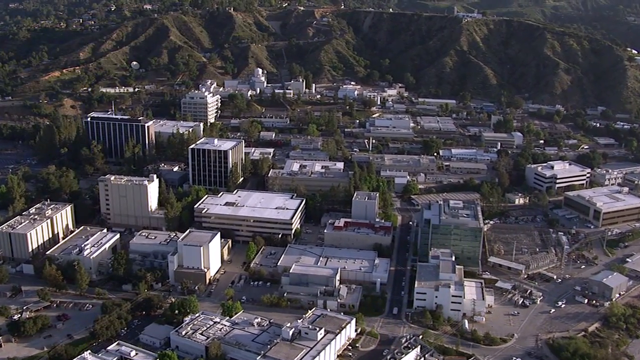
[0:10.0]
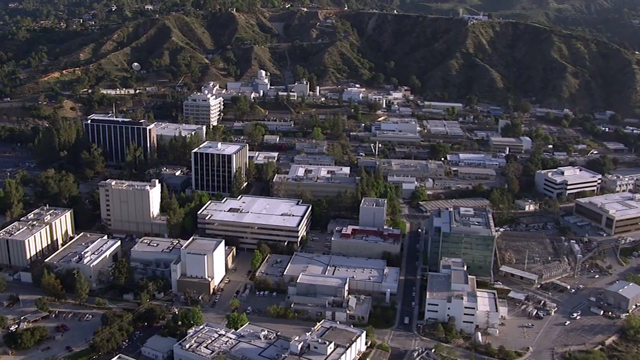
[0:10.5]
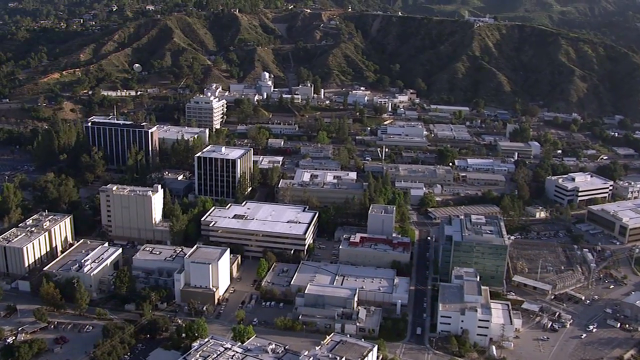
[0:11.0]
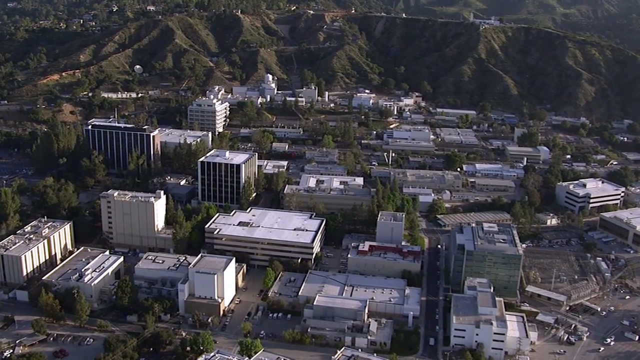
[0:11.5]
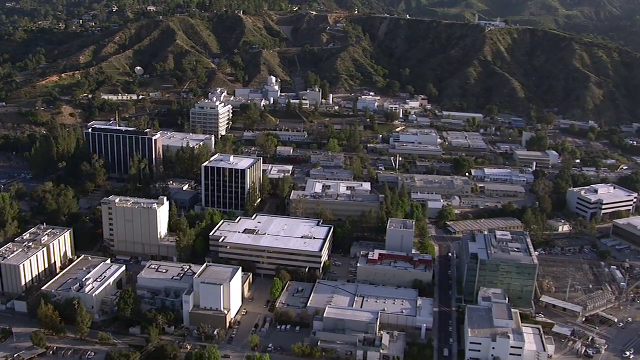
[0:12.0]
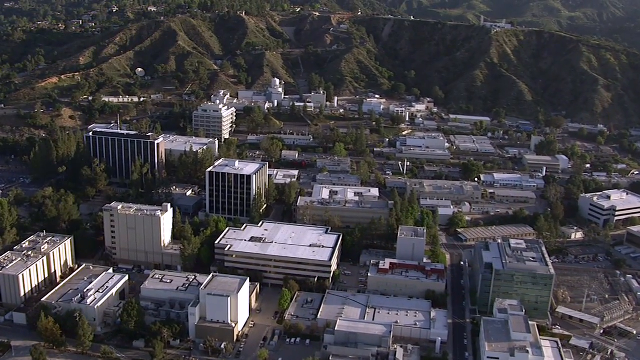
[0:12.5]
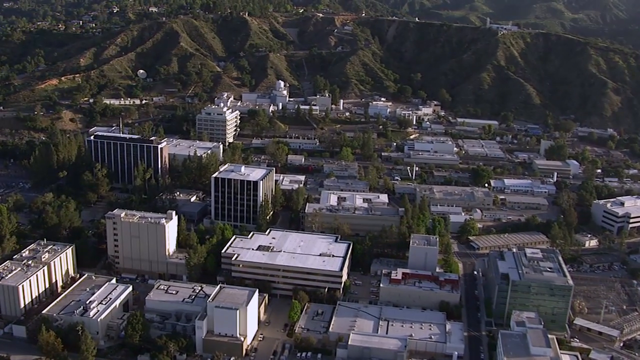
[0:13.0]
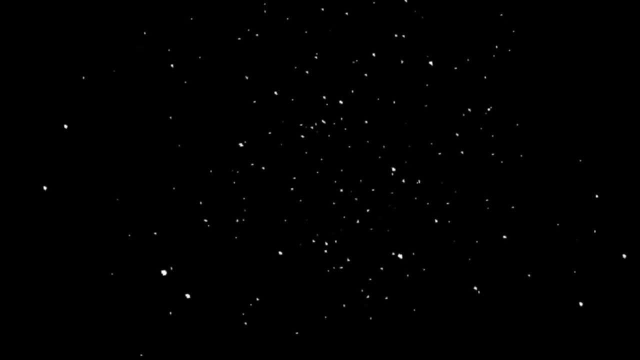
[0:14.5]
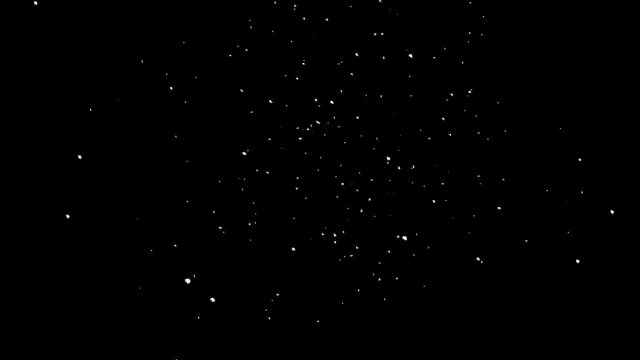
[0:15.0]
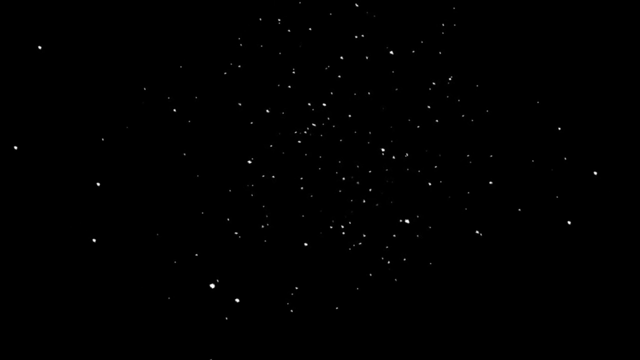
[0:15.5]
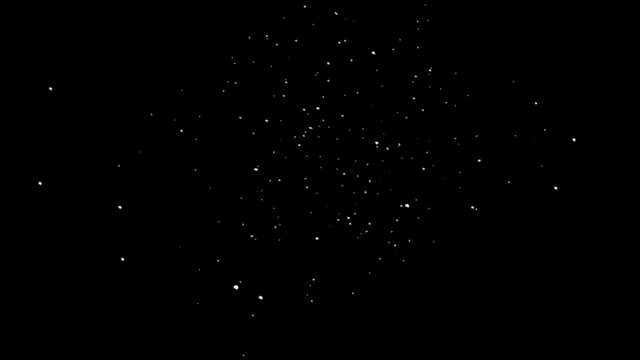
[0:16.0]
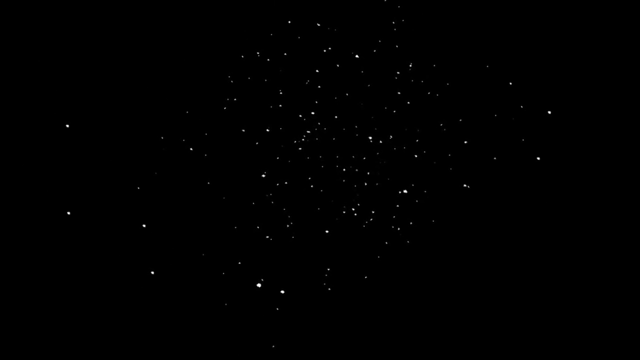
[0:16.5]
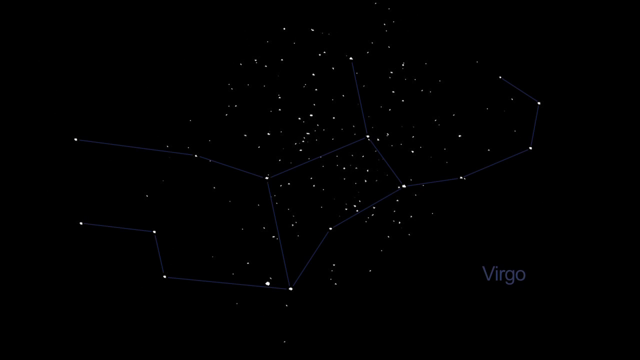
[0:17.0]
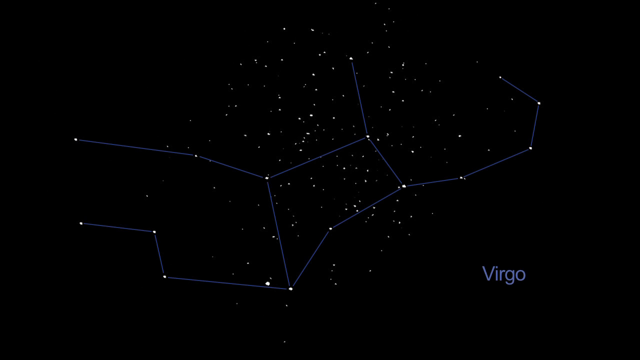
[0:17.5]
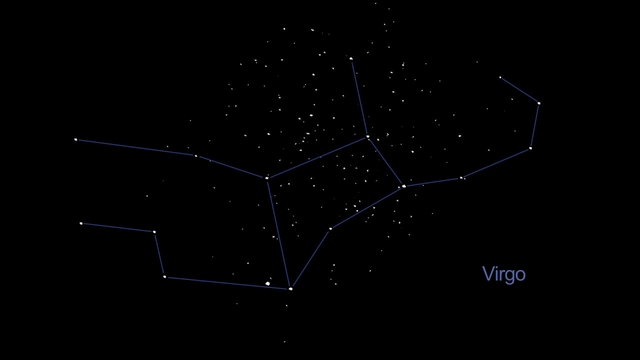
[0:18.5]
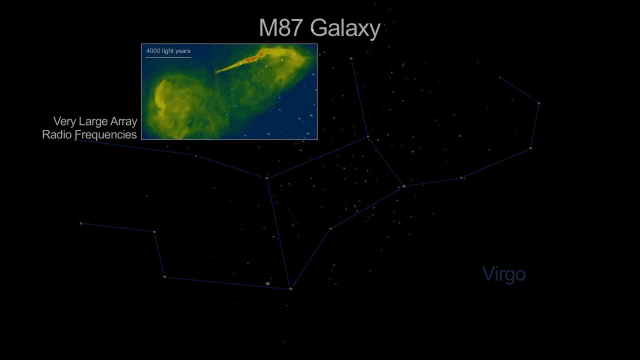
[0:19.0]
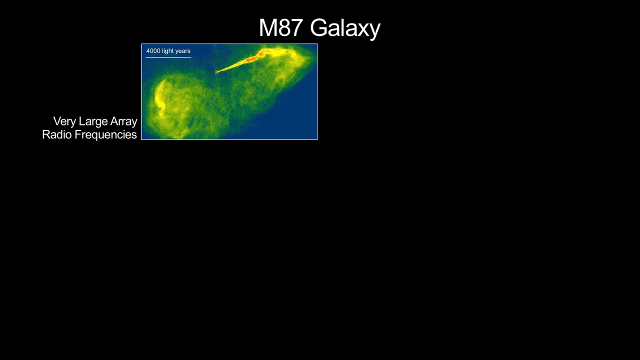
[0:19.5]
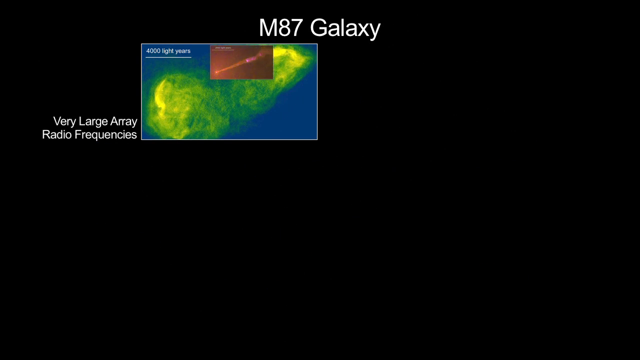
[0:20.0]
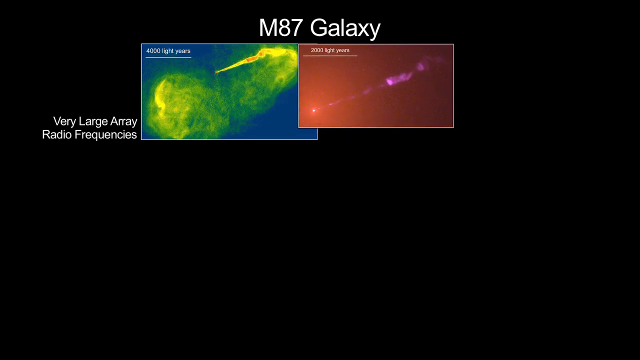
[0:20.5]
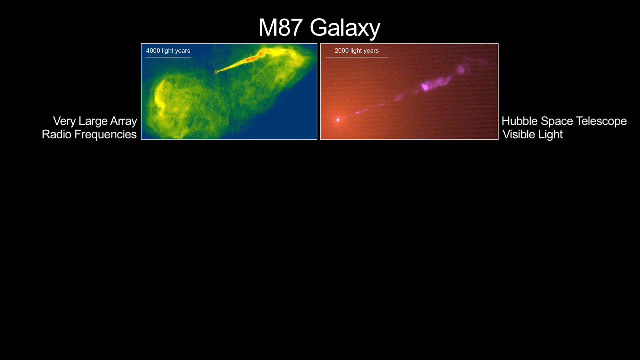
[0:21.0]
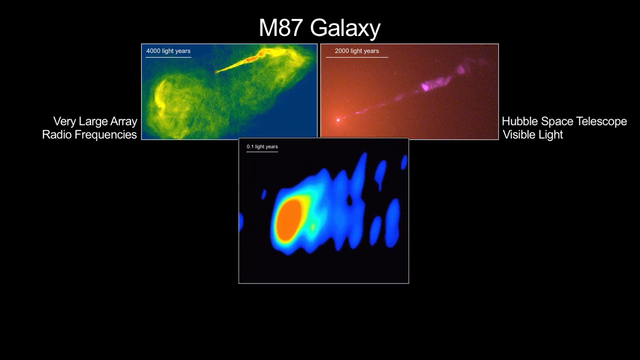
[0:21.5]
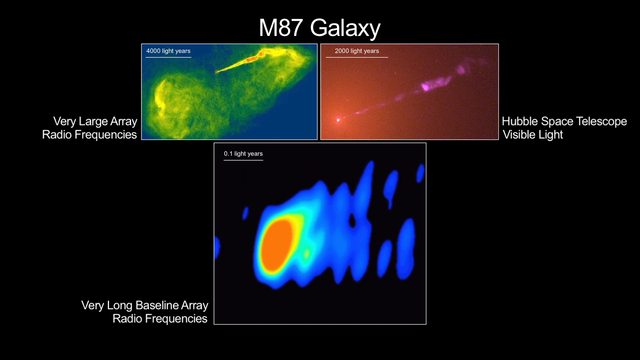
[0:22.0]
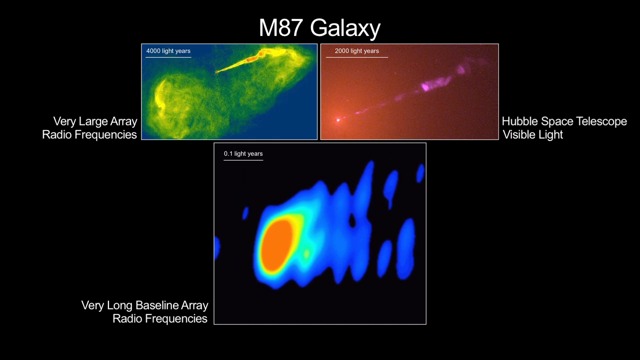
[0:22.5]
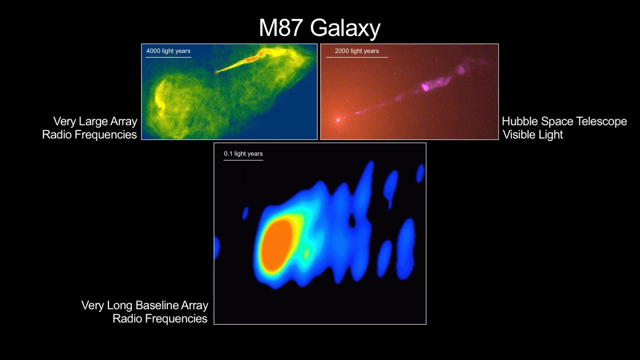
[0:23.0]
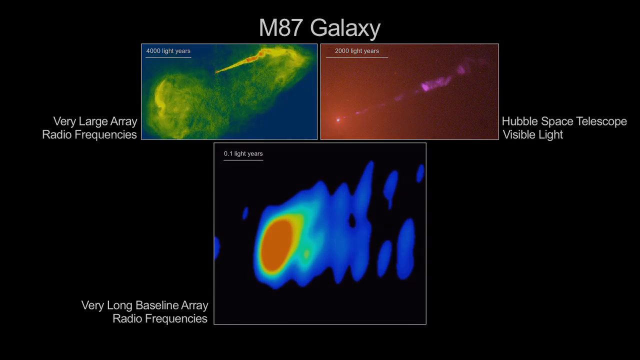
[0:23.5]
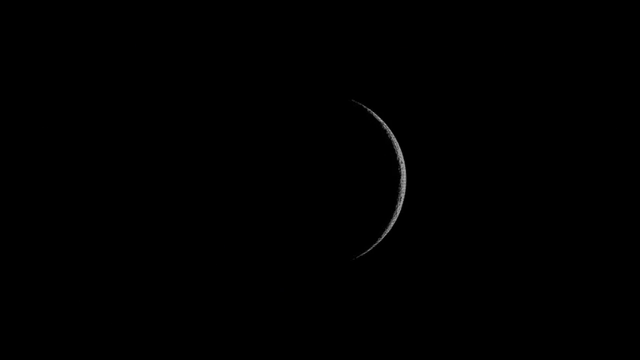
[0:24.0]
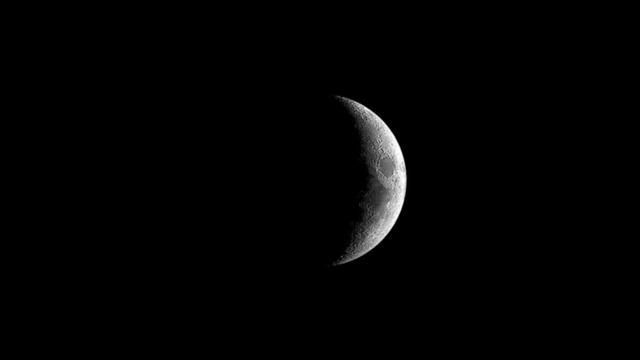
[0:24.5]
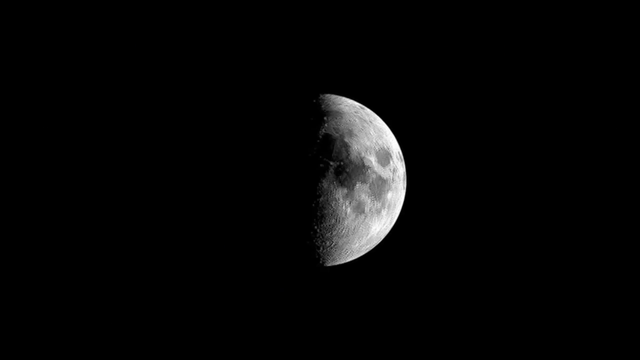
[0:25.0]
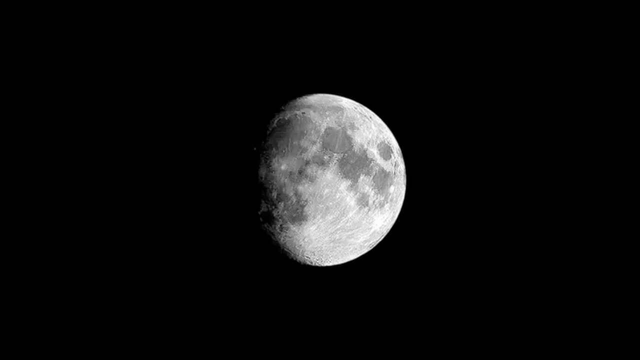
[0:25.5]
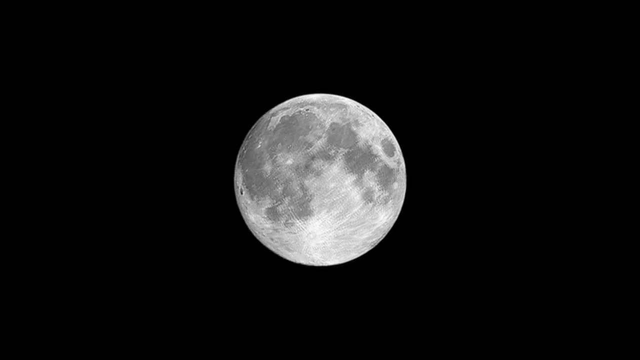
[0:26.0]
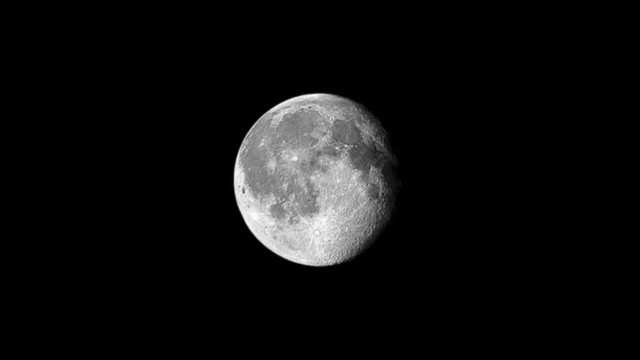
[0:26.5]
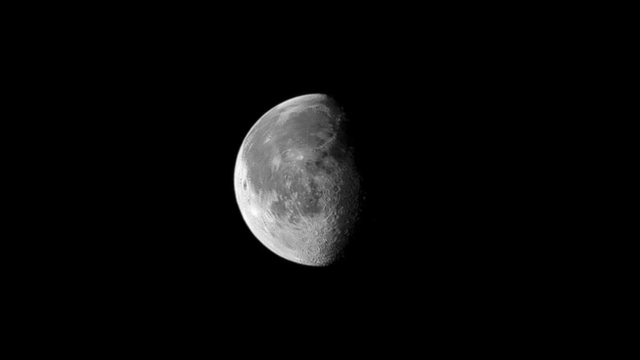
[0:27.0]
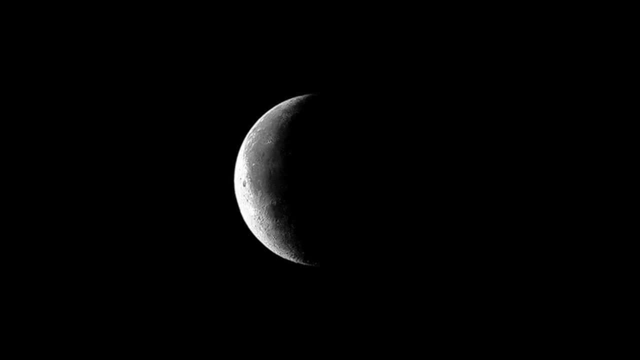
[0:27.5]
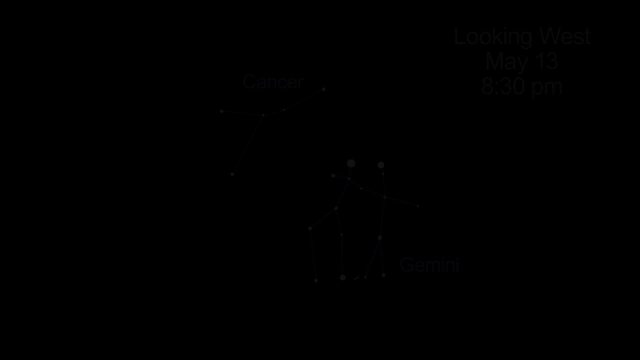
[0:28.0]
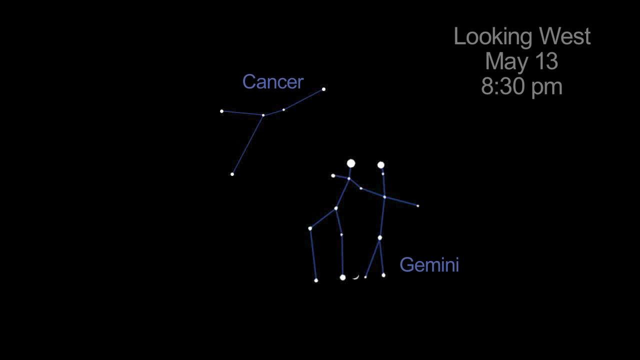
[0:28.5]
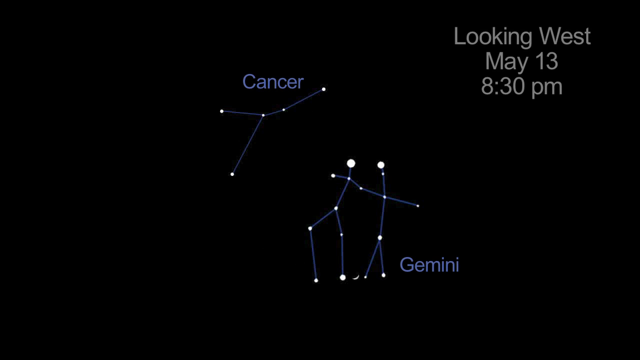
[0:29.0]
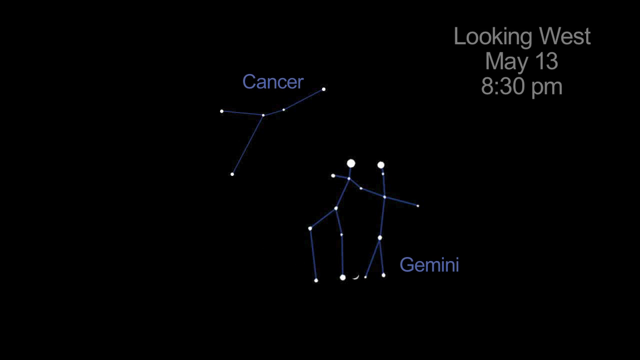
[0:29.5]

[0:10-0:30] Many different buildings sit in a valley surrounded by hills, with many trees; the hills have grass on them, and some cars are parked below, around the buildings. The scene switches to a star field spinning counterclockwise, and a constellation appears connected by blue lines. The view changes again to a black background with "M87 Galaxy" in white text at the top of the screen. An image appears with "4,000 light years" on it in white text; it is green, red, orange and yellow on a light blue or dark blue background. To the left of the image, white text reads "very large array radio frequencies." Another image pops up to the right of it, reading "2,000 light years" and showing something purple with red surrounding it. To the right of this image, white text reads "Hubble Space Telescope visible light."